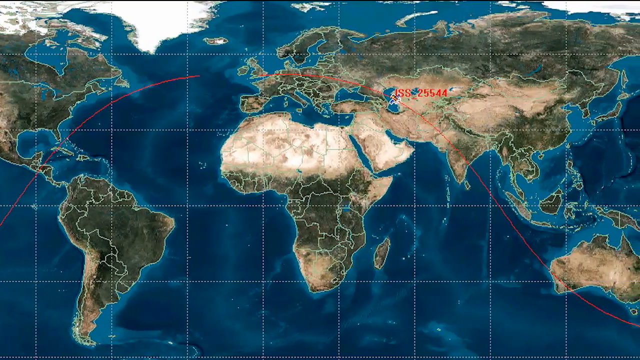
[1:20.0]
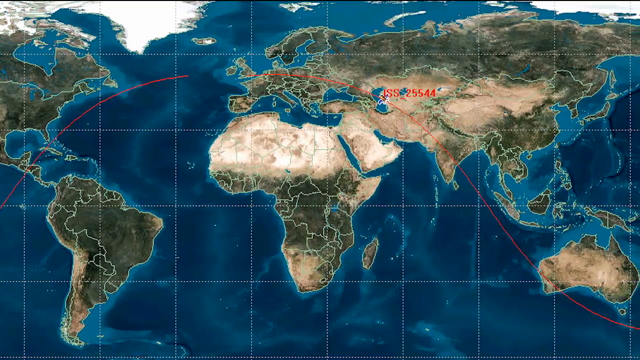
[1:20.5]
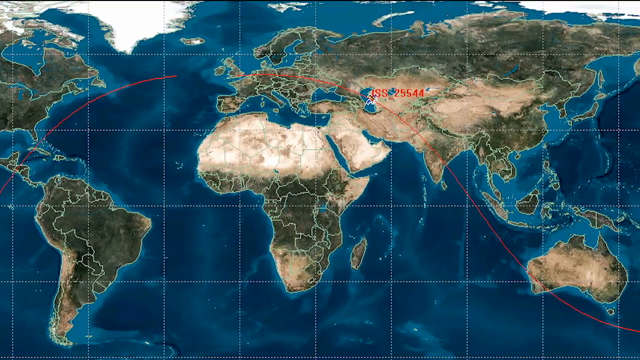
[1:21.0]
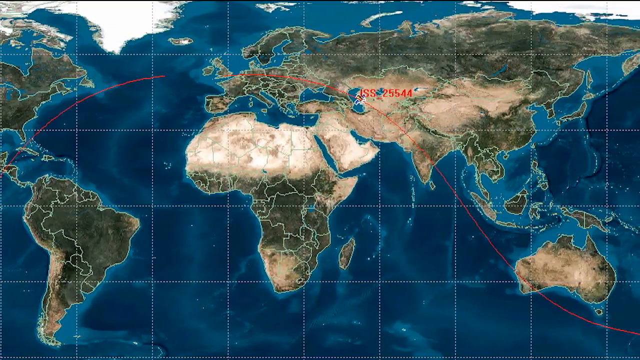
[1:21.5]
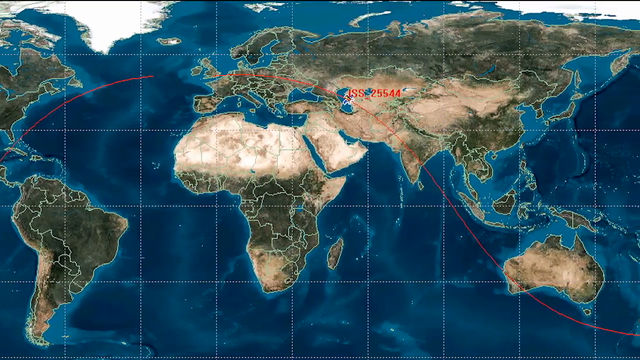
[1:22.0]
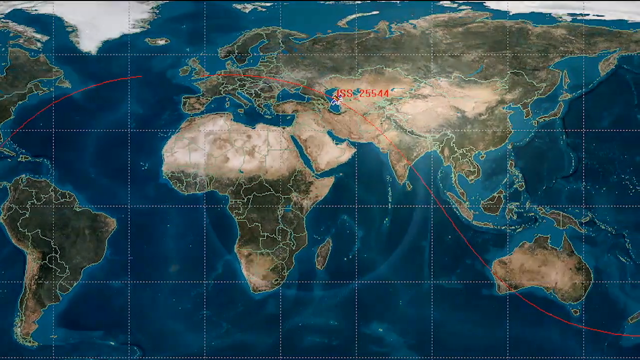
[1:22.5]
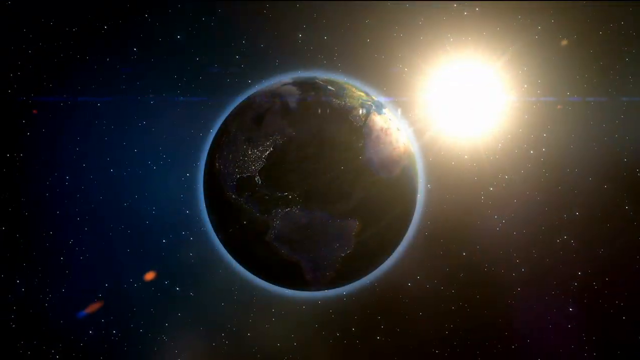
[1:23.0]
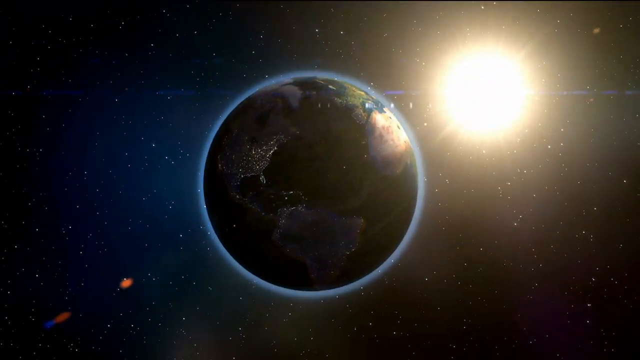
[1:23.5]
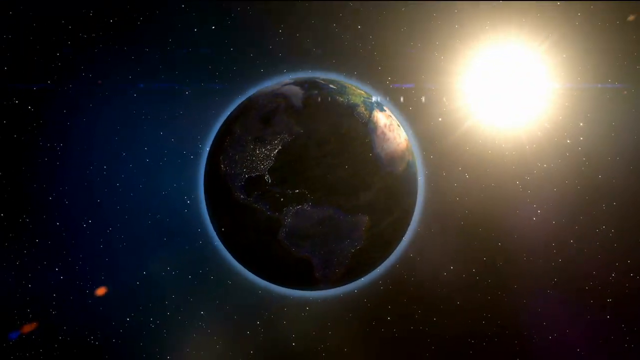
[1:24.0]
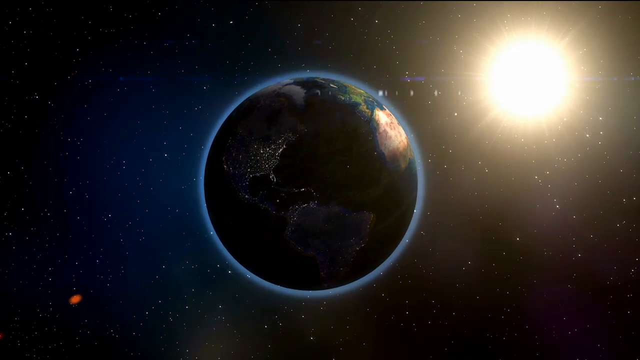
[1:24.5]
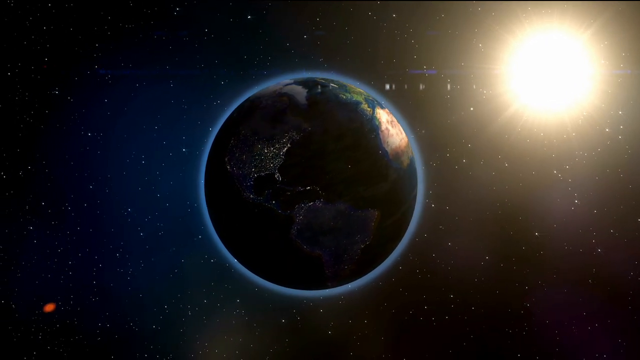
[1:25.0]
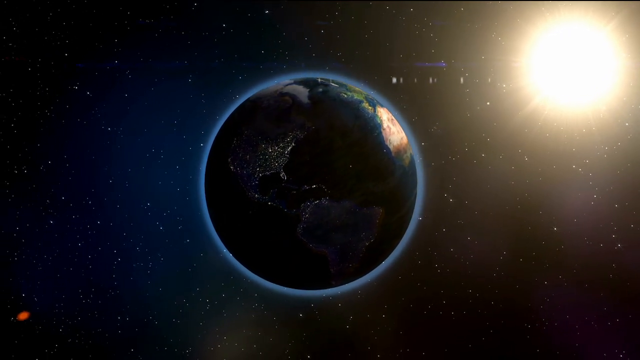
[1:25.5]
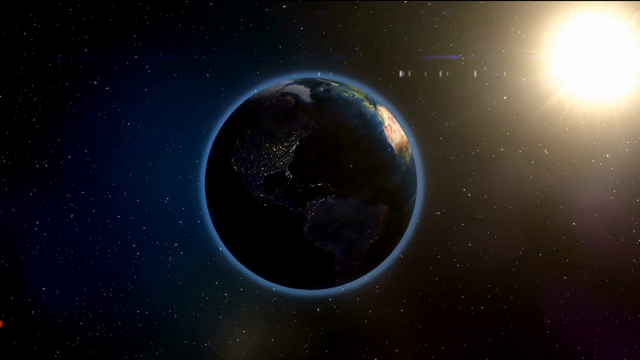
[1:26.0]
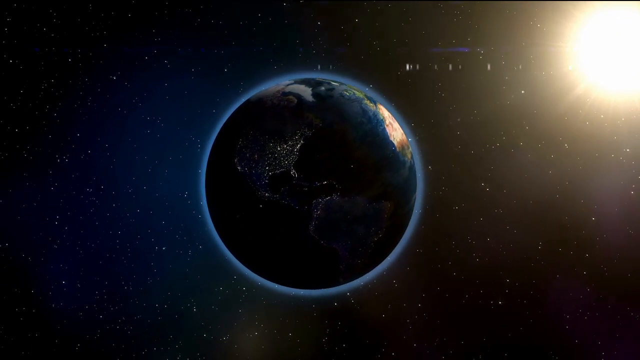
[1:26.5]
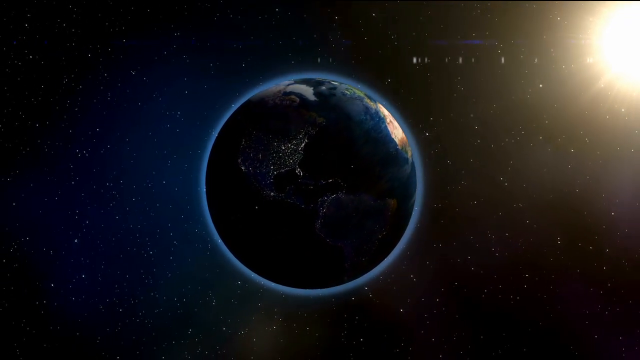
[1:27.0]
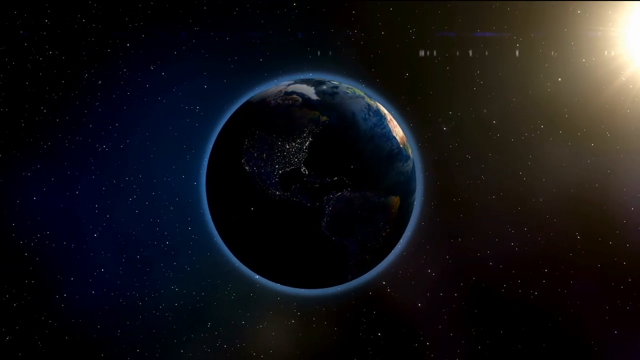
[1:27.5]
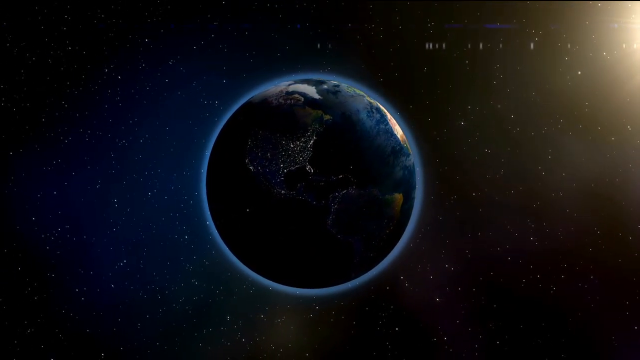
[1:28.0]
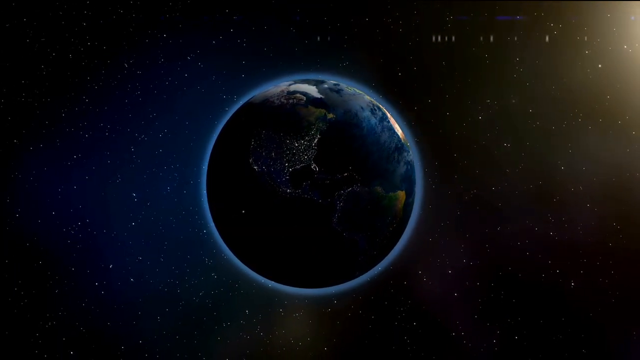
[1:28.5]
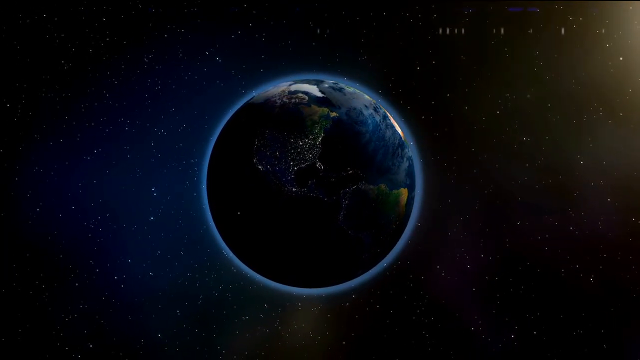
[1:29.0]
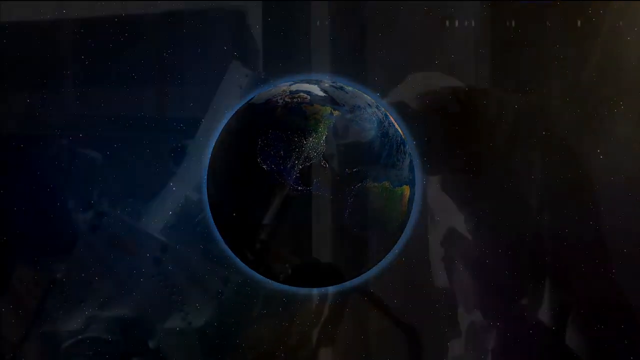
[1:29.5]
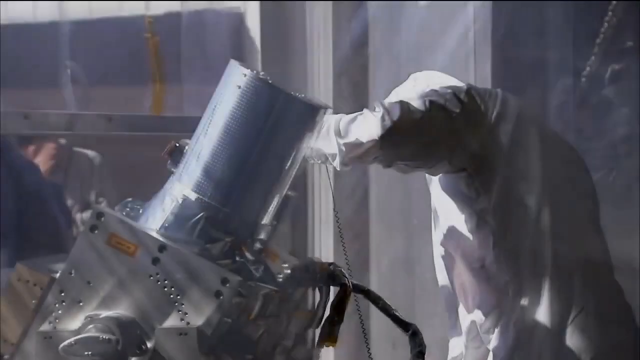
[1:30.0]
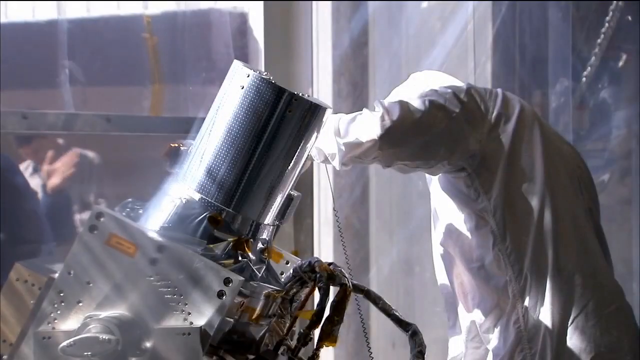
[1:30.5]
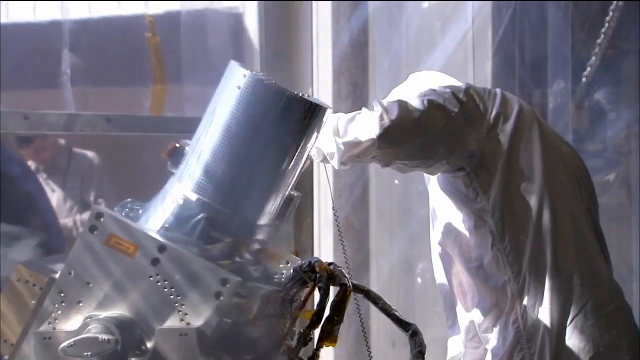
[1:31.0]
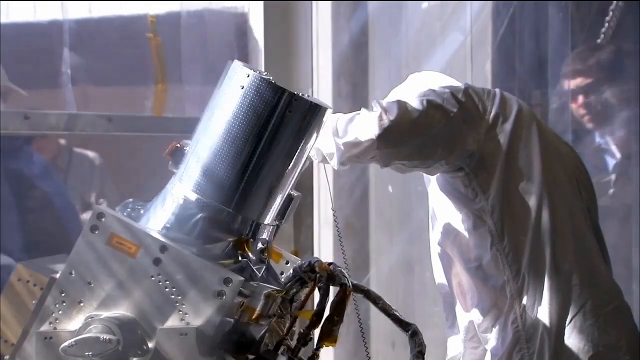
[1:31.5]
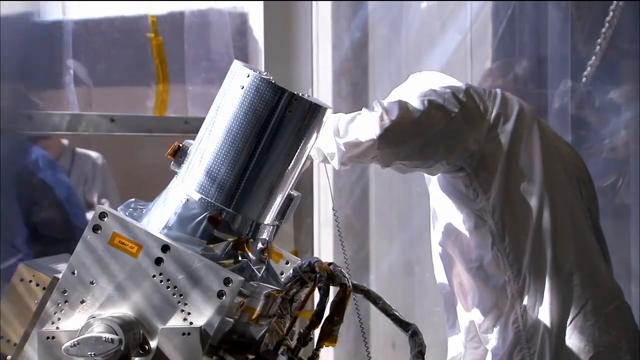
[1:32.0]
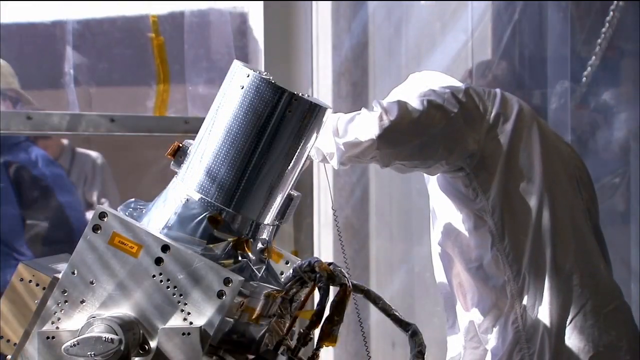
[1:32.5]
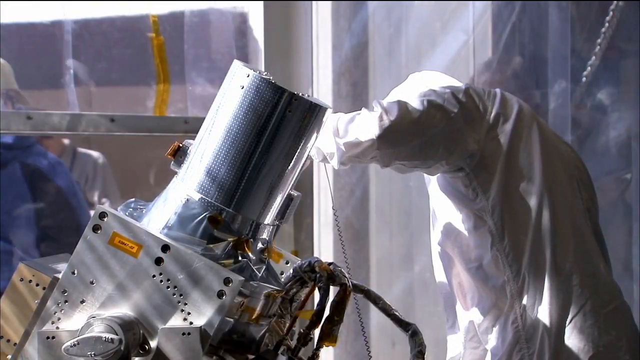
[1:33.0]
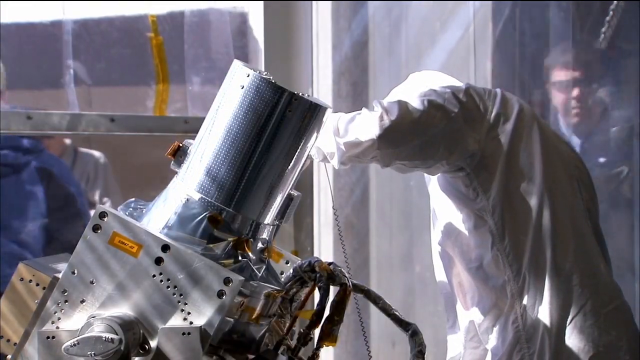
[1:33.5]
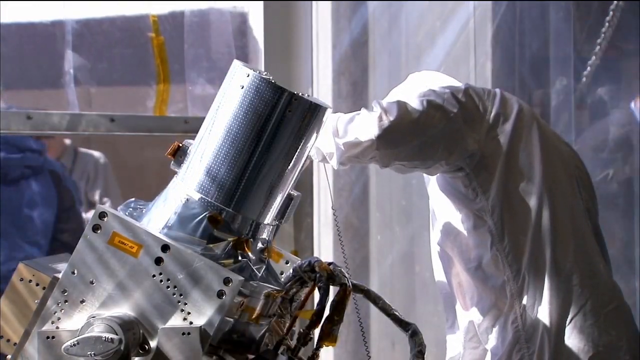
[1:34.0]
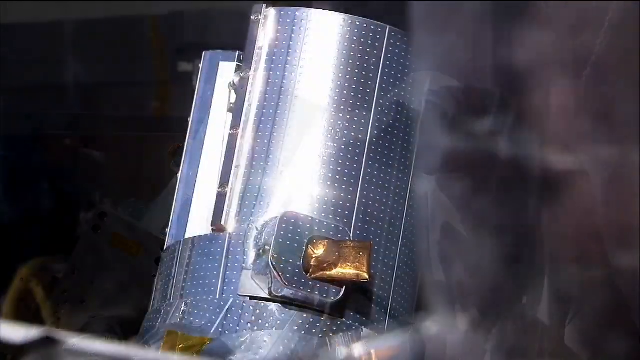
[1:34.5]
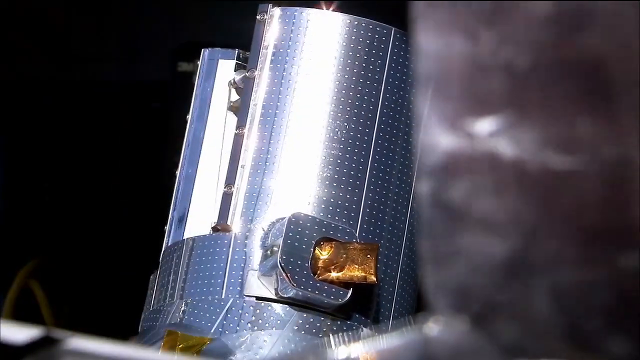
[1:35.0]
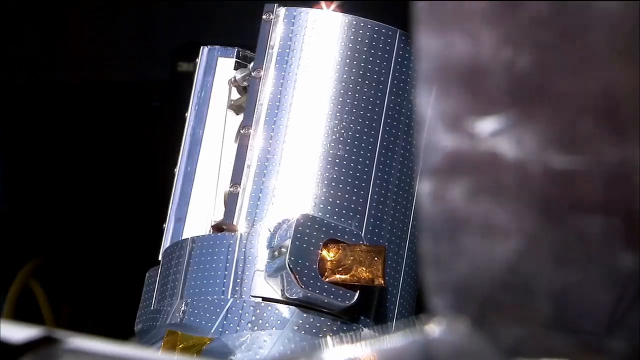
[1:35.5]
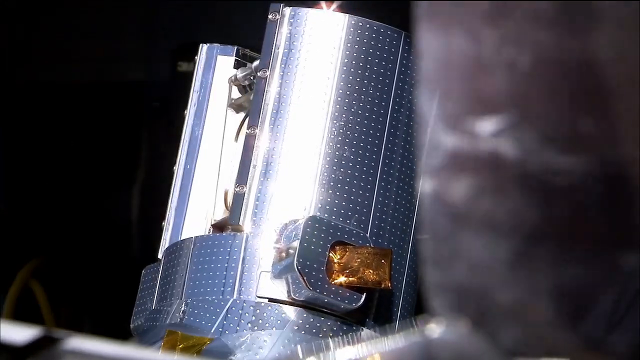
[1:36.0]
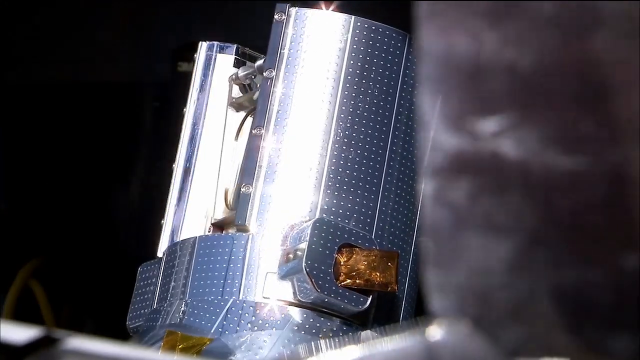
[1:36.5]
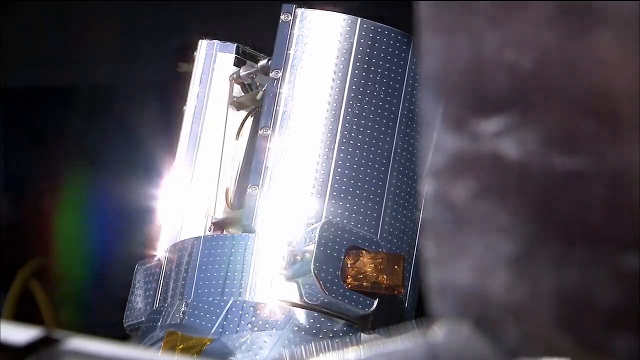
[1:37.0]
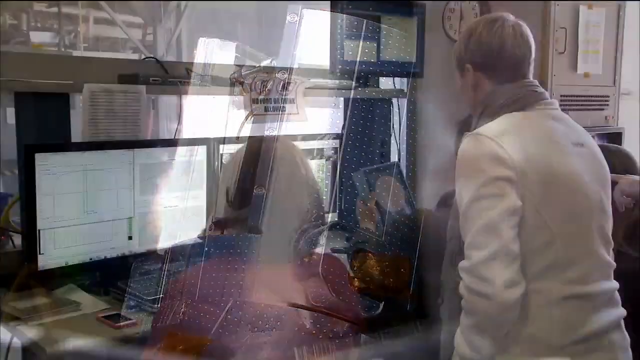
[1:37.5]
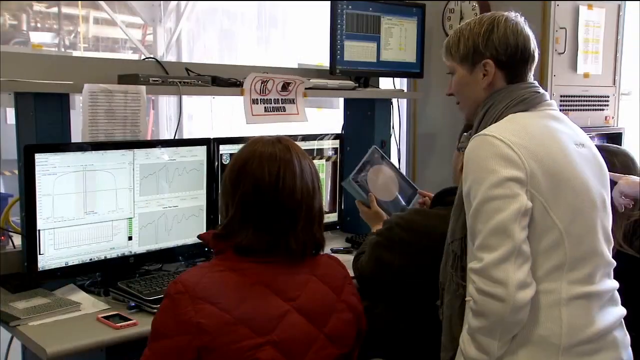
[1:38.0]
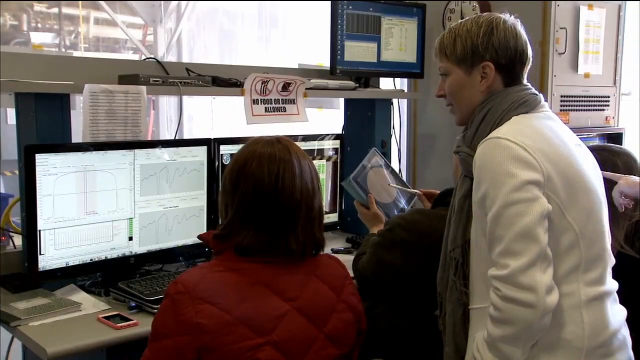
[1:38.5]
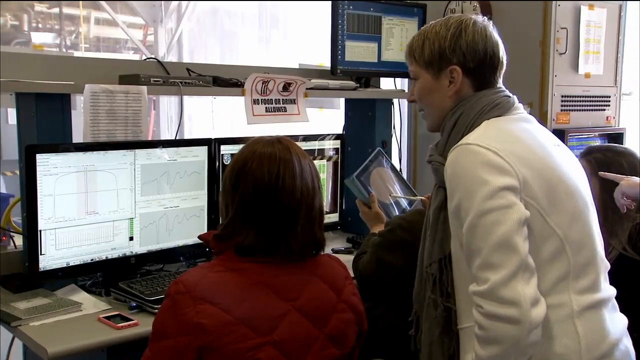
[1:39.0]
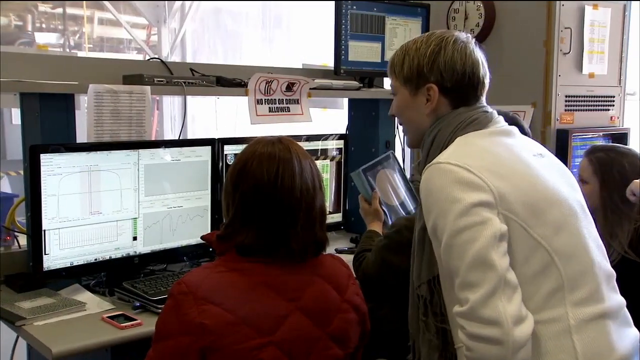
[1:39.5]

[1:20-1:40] A digital map shows the oceans and all the countries, slowly moving from left to right; the United States and South America are visible, and the rest of the countries come into view as it pans right. The screen then changes to outer space, with a yellow ball, the sun, in the top right corner and a very dark Earth in the middle, surrounded by many small white dots that are stars. The scene cuts to a room enclosed in plastic. In the middle of the room is a metal machine with a large silver metal cylinder and a metal square at its bottom. A person wears a white jumpsuit with a hood that covers the head, arms, legs and whole body.